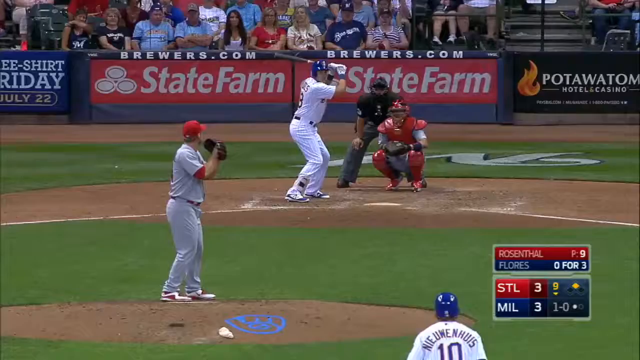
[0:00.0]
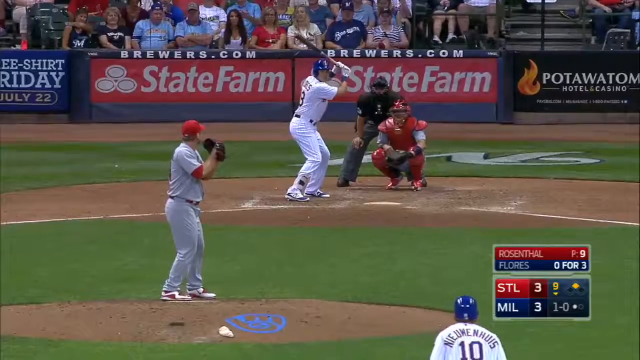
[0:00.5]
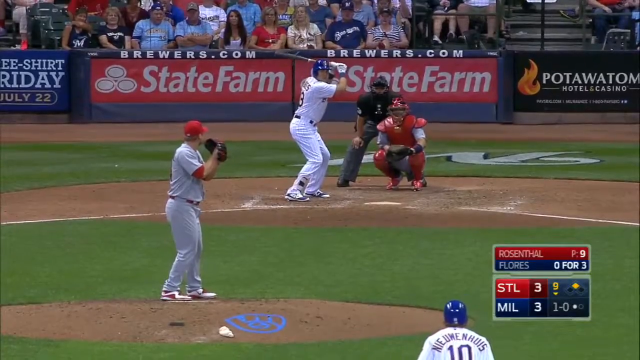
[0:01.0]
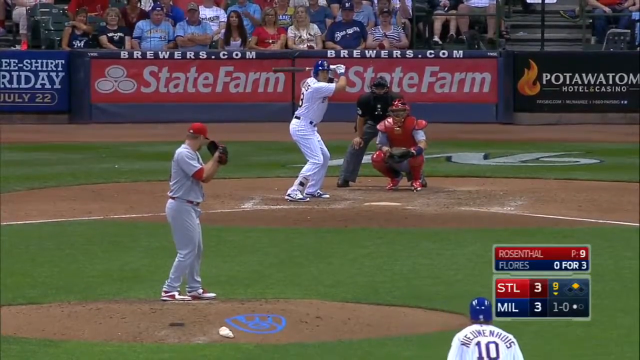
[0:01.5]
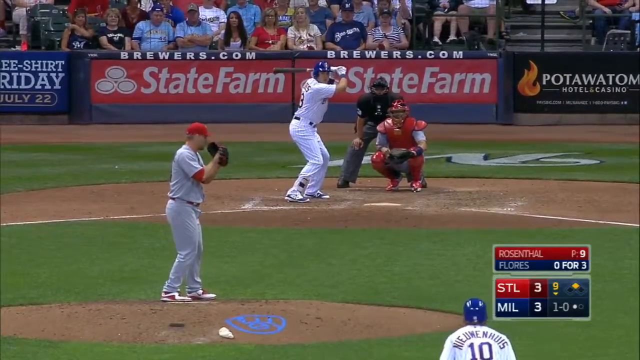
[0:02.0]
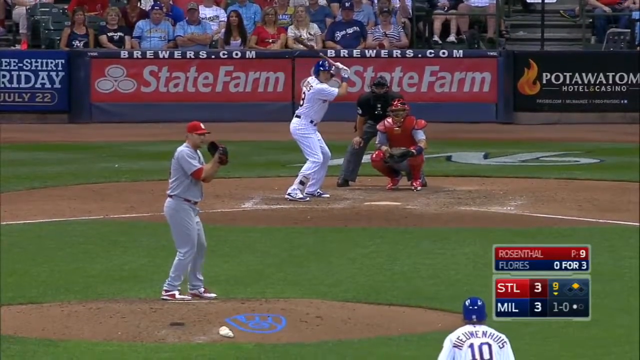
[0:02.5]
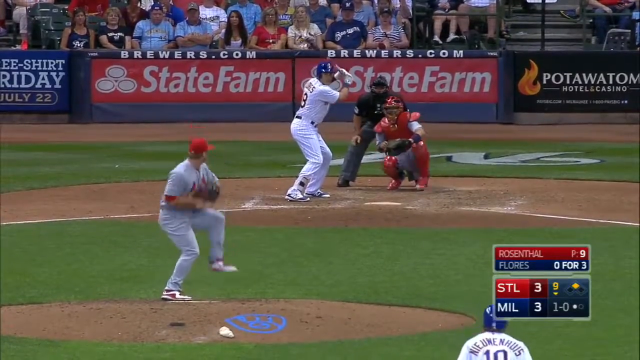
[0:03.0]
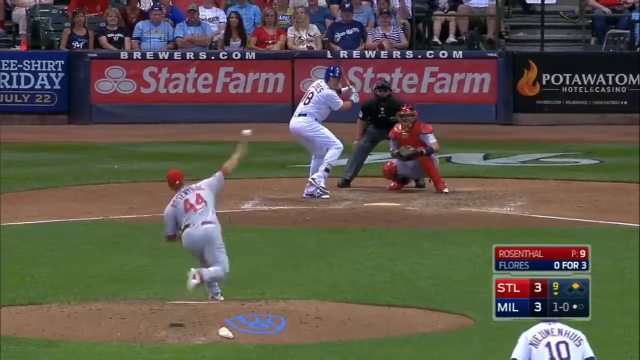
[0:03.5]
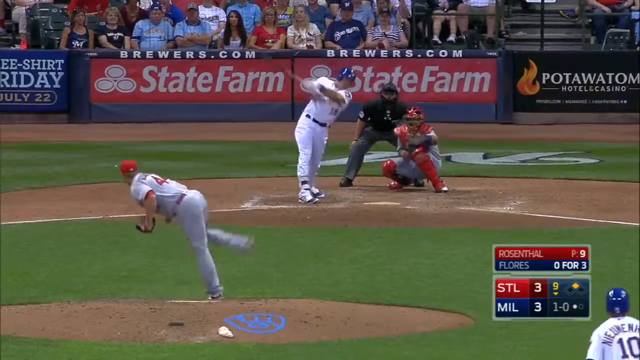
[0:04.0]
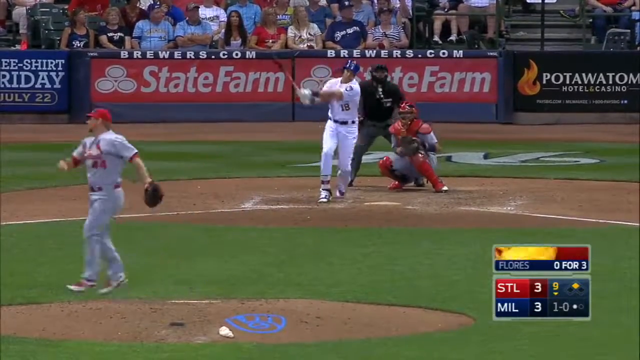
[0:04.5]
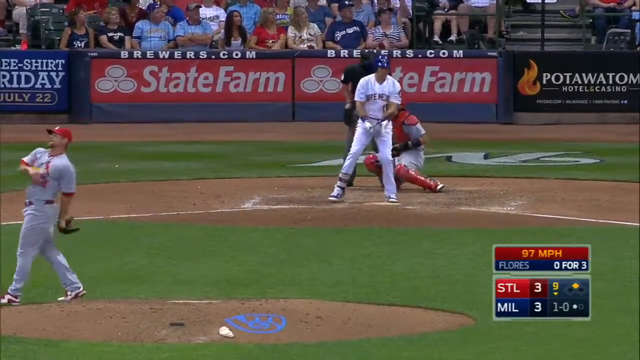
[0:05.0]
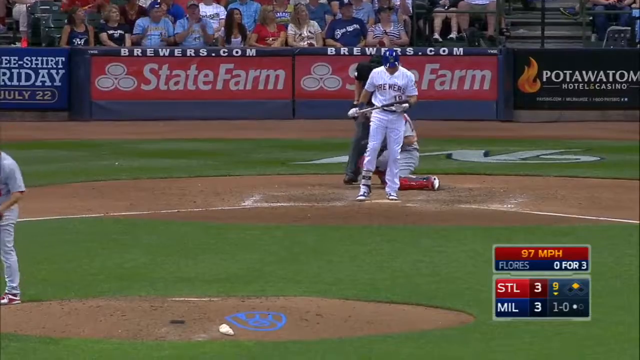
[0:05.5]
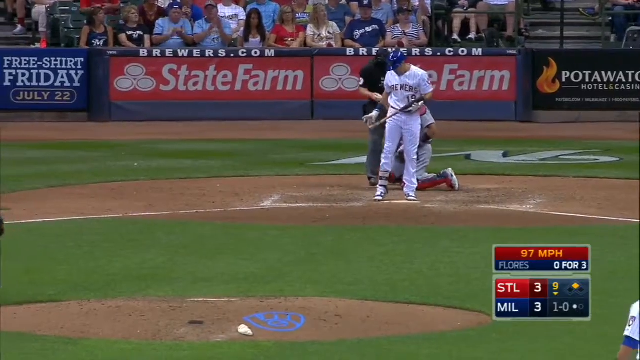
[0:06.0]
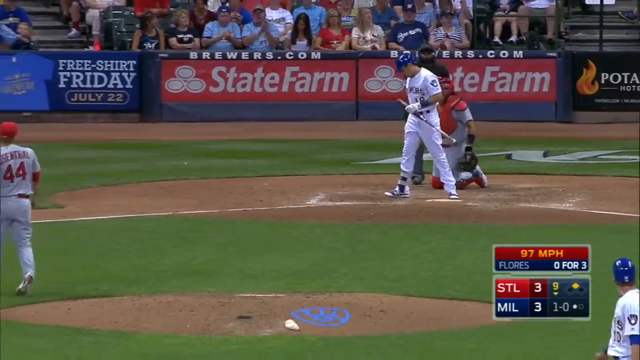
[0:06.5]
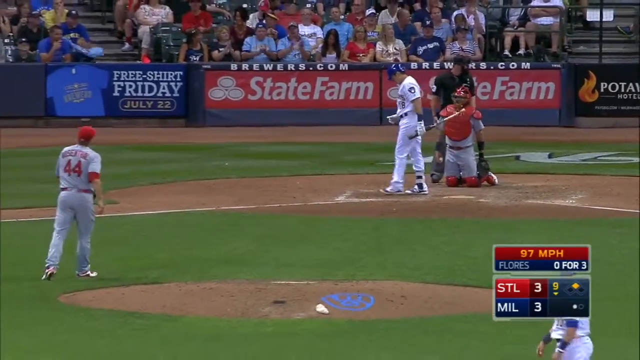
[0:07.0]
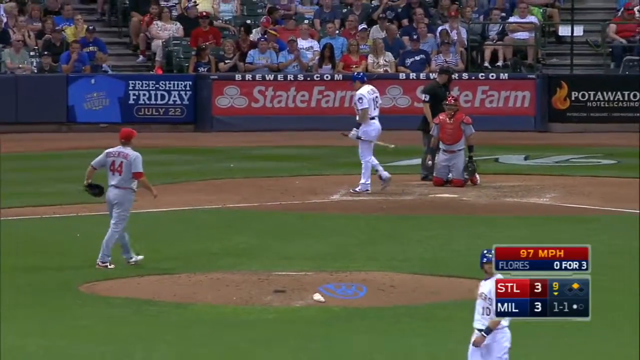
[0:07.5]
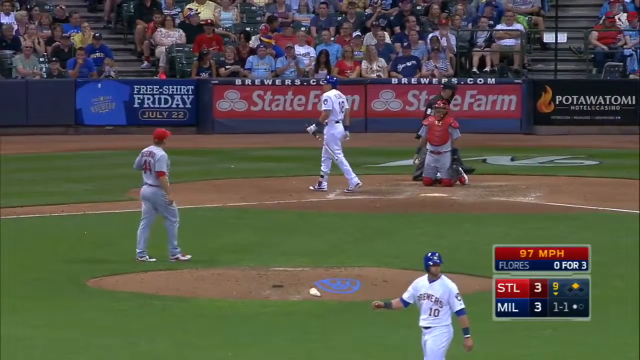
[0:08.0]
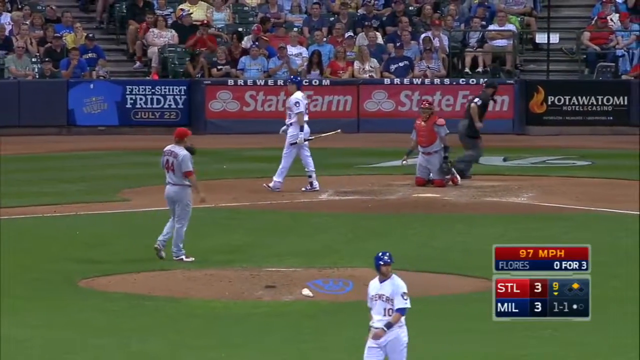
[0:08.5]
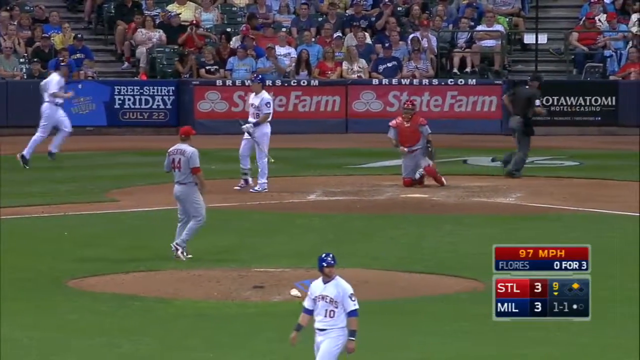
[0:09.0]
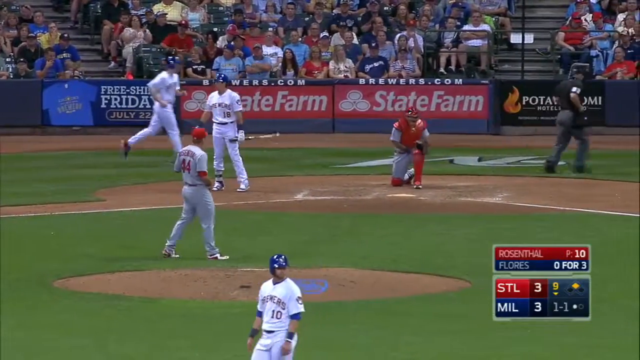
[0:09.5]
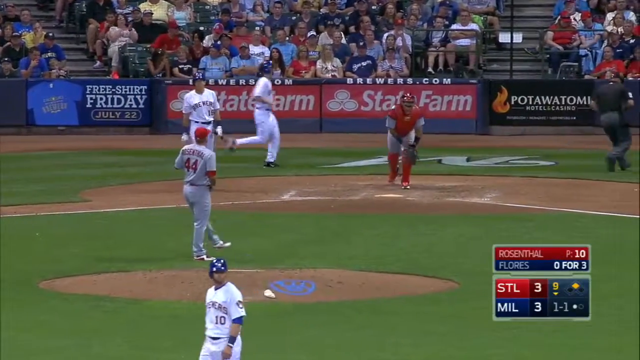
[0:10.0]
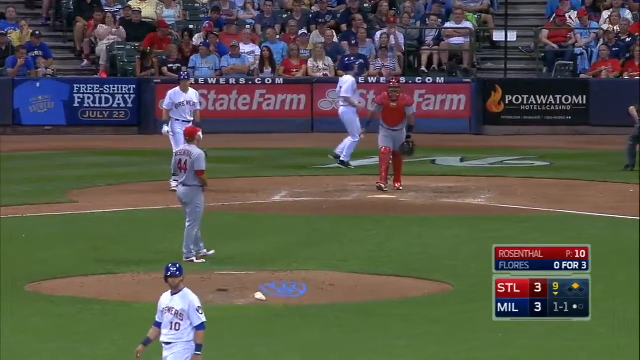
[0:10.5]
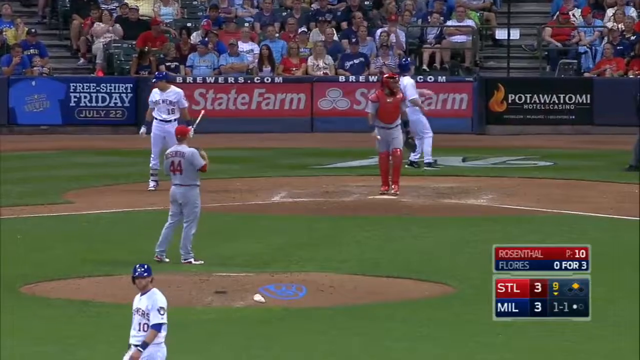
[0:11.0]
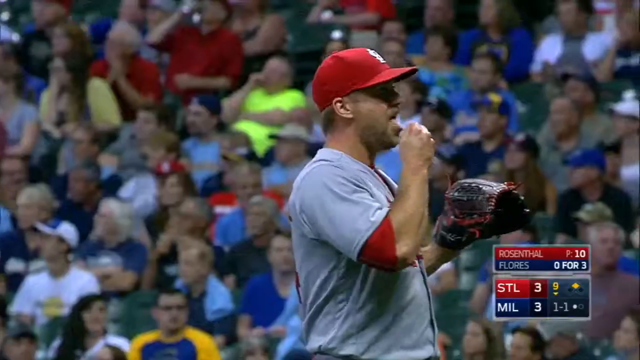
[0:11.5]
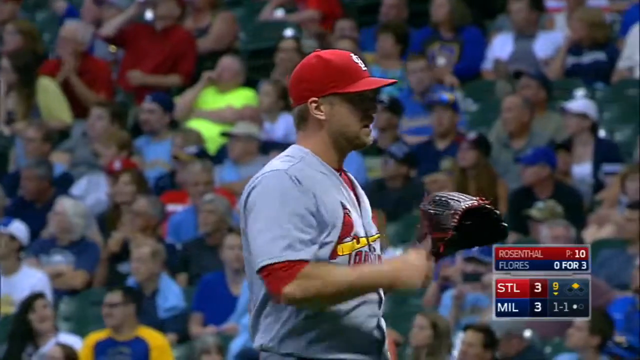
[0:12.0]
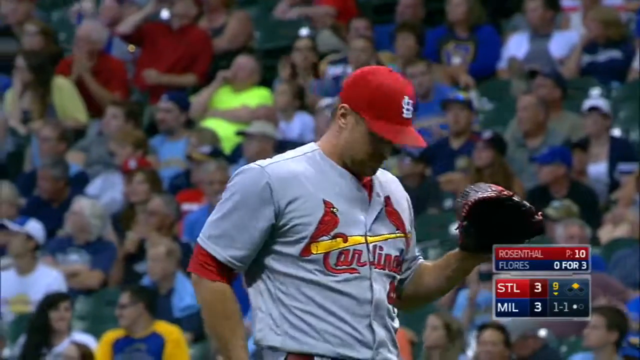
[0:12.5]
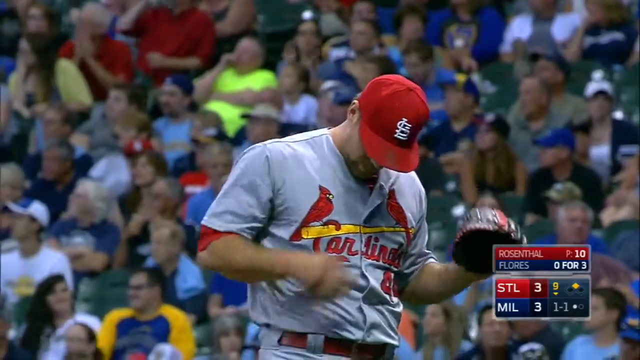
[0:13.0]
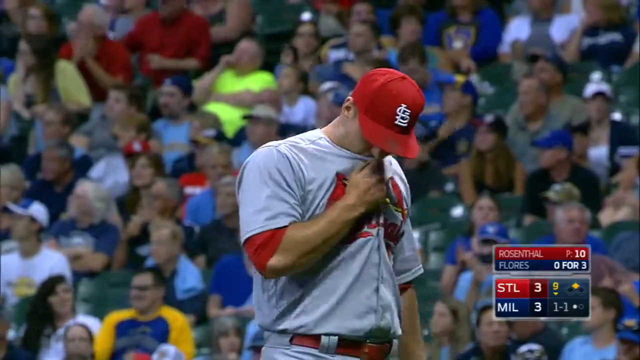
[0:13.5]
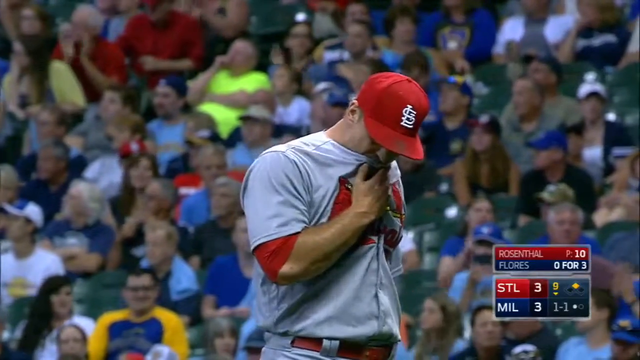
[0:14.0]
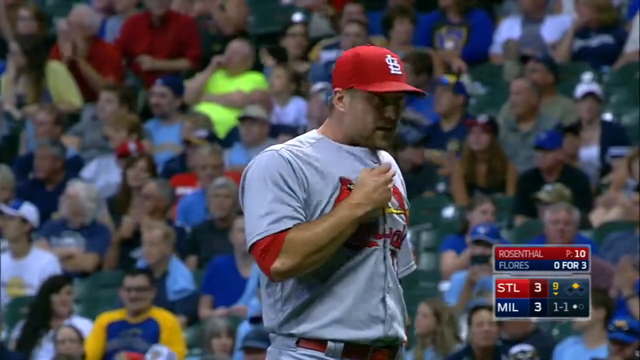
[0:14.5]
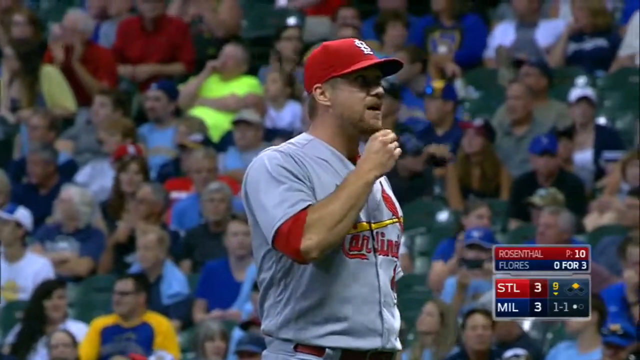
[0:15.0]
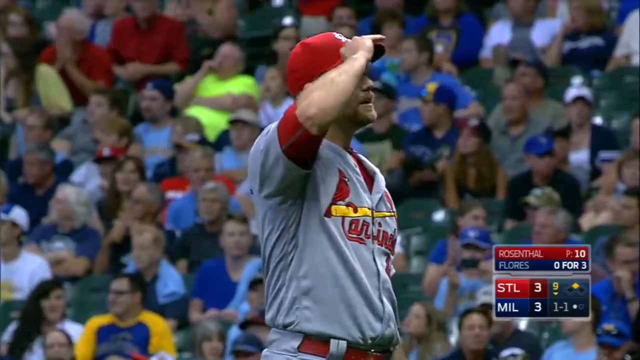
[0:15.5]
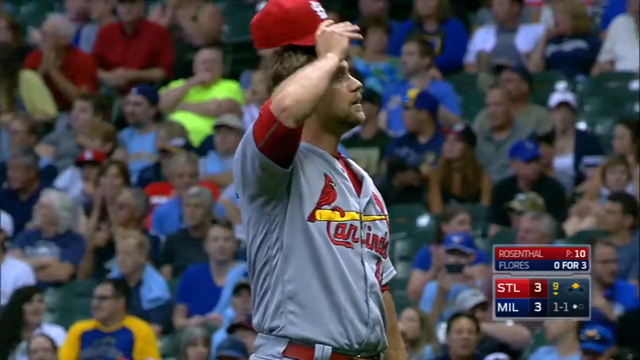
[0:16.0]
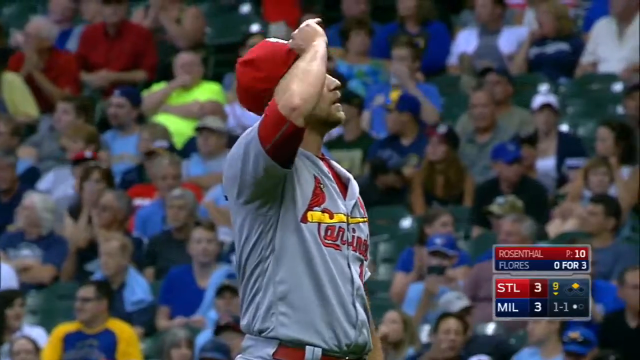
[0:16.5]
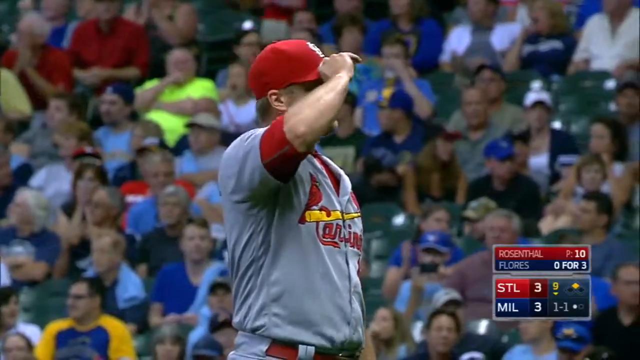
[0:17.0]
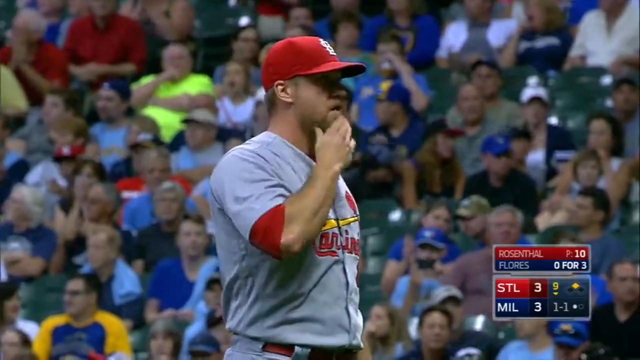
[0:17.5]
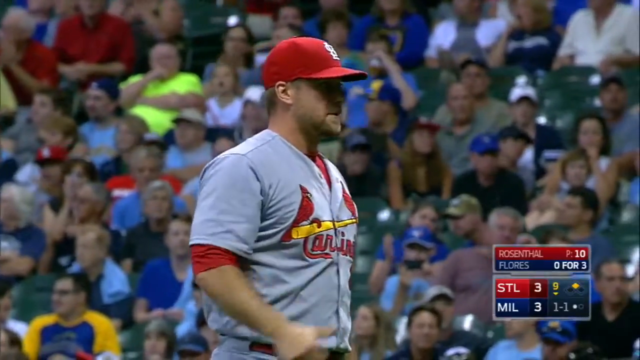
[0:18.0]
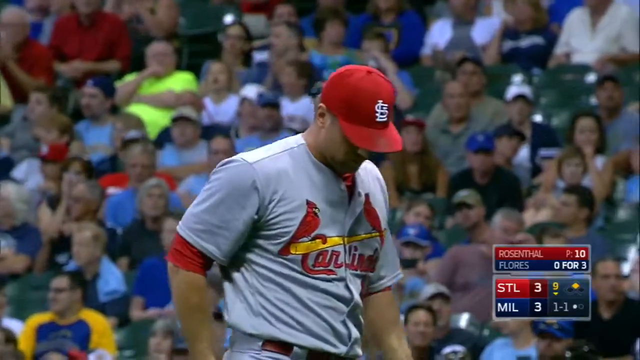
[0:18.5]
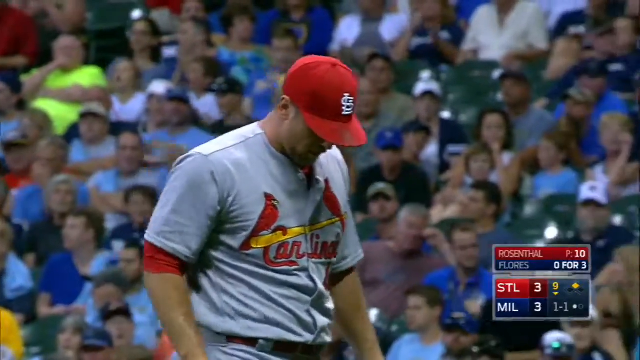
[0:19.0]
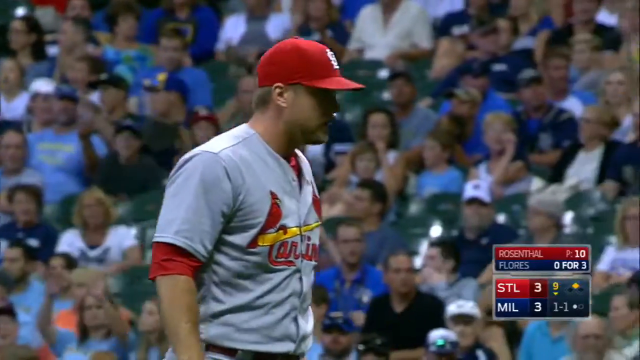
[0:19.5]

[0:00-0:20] A baseball game is underway between the St. Louis Cardinals, in gray with red, and a team that is possibly Milwaukee, with the score tied three to three. Sponsors including State Farm and Pottawattamie appear on the barriers in the background. A player in a red cap and grayish outfit throws a pitch to the batter, who wears a white outfit and a blue helmet. Flores is the batter, and the pitch is 97 miles an hour. Many people in the crowd wear greens, yellows, blues and reds.